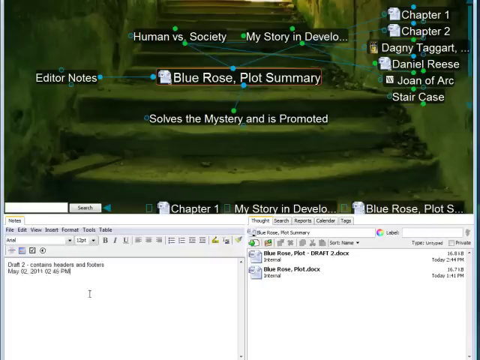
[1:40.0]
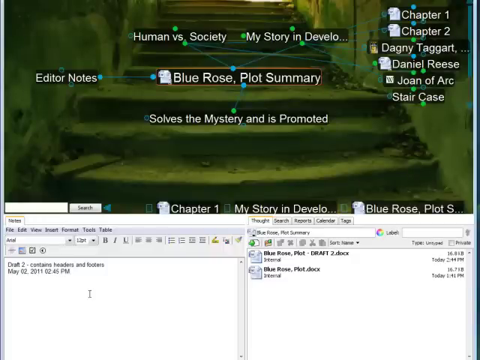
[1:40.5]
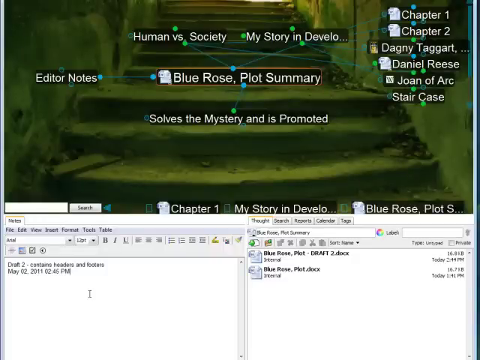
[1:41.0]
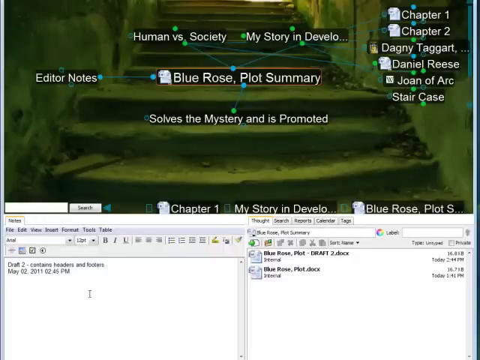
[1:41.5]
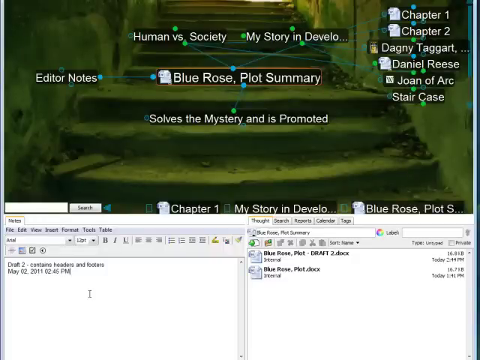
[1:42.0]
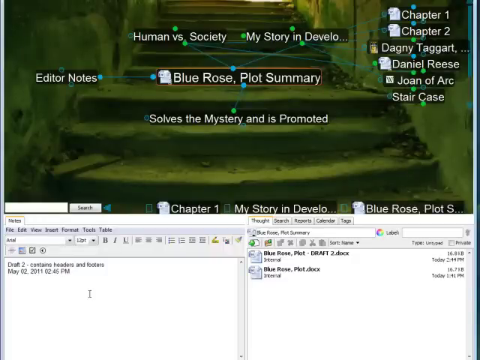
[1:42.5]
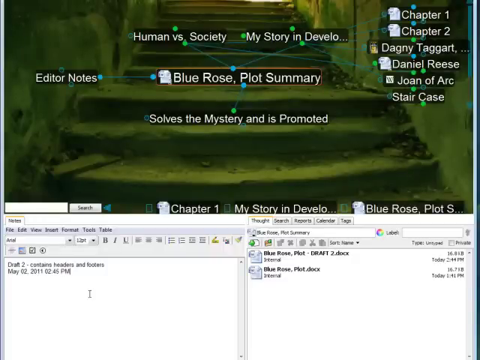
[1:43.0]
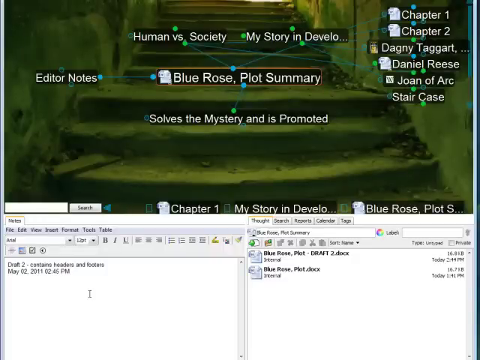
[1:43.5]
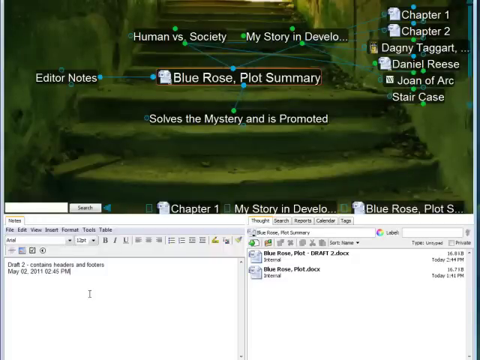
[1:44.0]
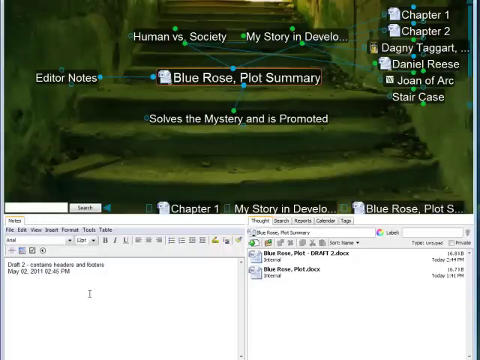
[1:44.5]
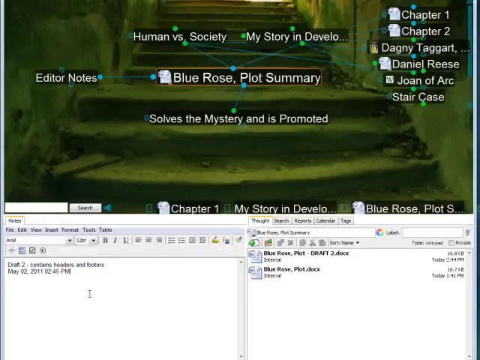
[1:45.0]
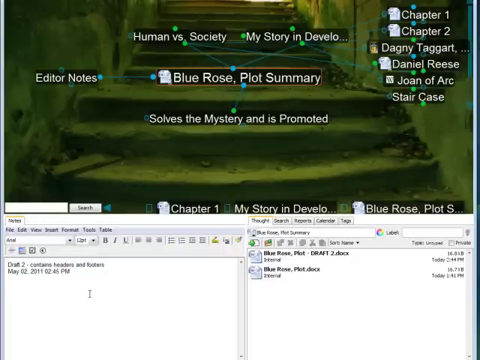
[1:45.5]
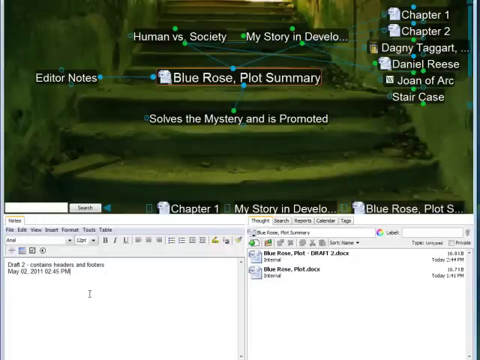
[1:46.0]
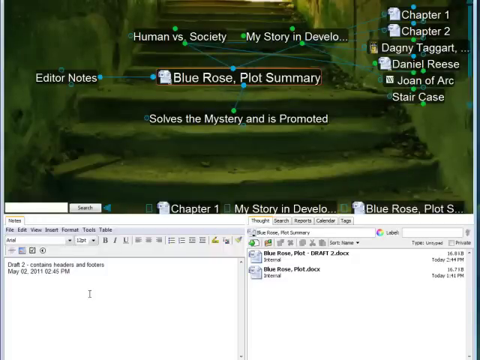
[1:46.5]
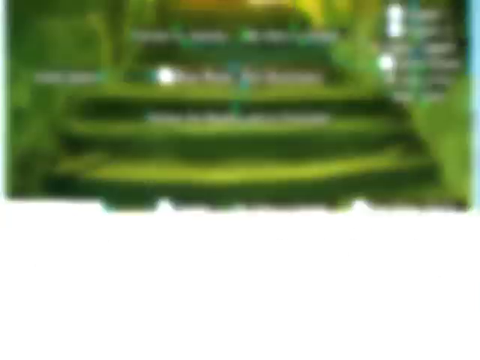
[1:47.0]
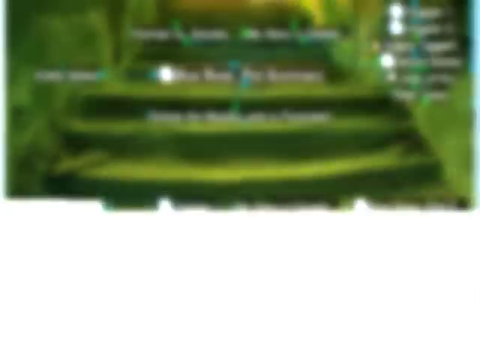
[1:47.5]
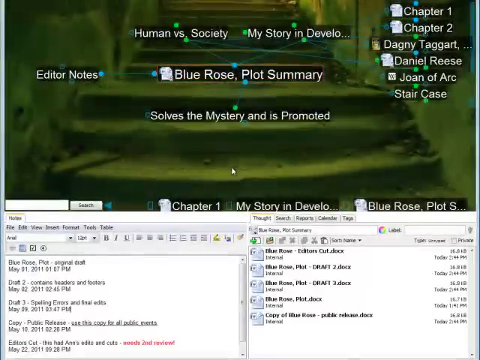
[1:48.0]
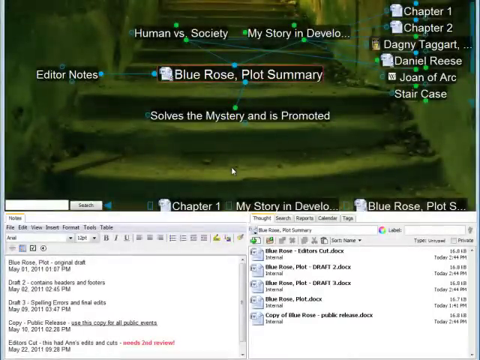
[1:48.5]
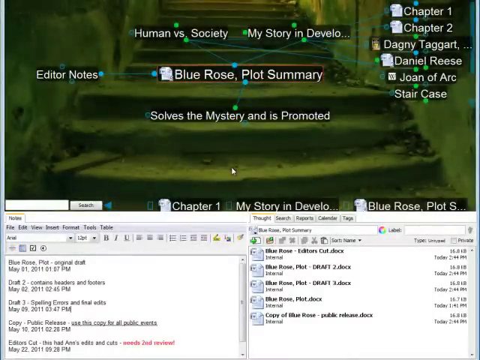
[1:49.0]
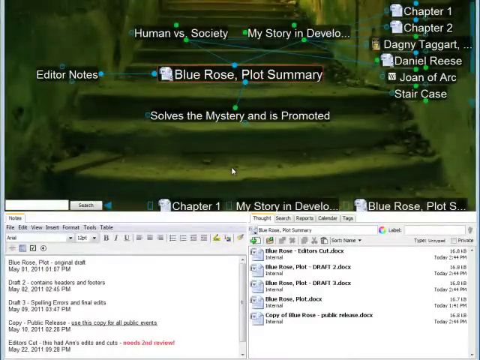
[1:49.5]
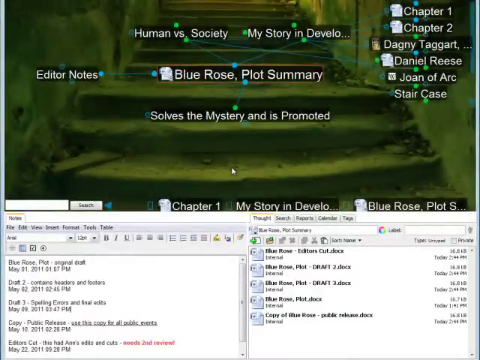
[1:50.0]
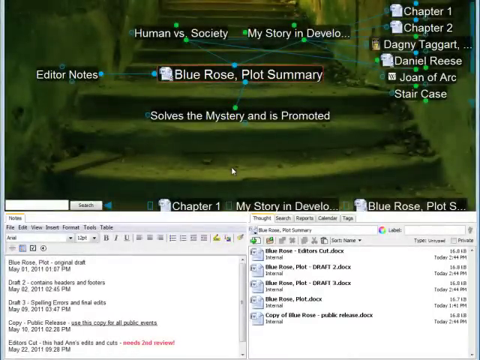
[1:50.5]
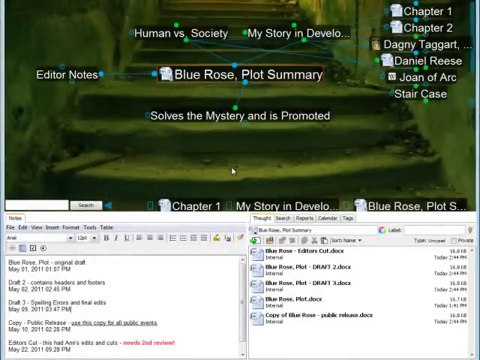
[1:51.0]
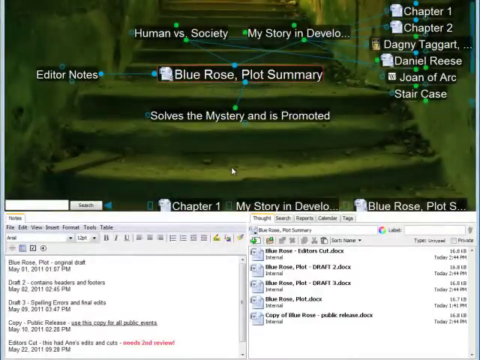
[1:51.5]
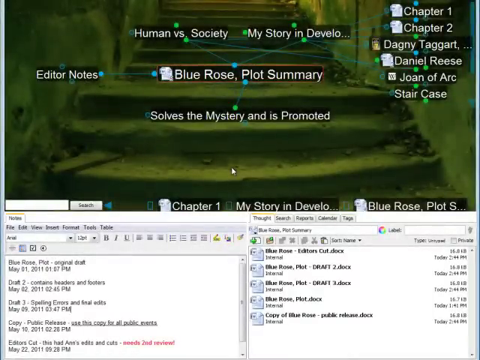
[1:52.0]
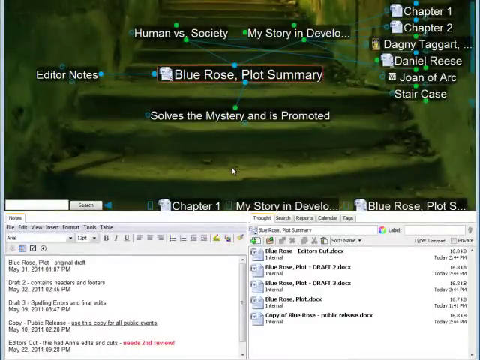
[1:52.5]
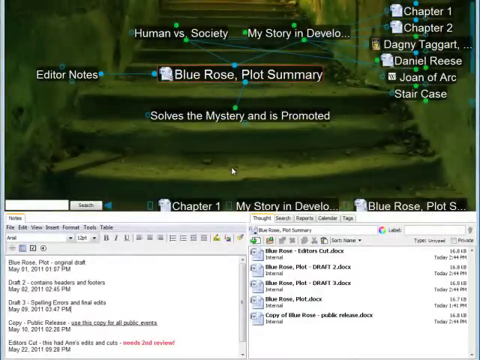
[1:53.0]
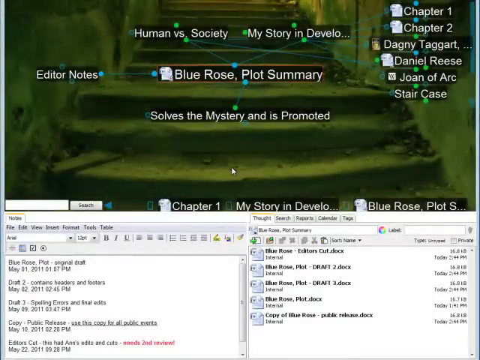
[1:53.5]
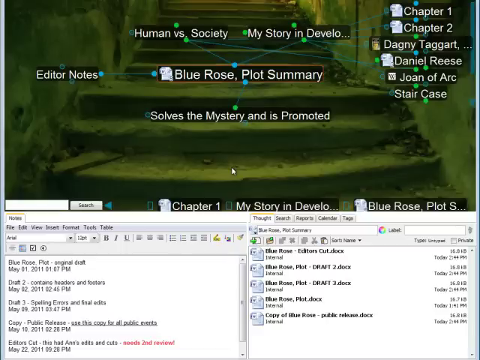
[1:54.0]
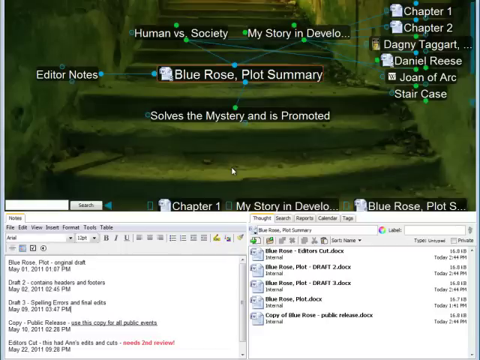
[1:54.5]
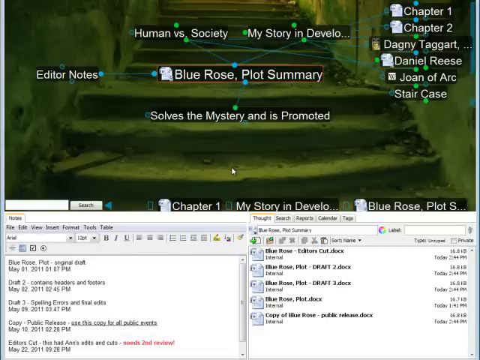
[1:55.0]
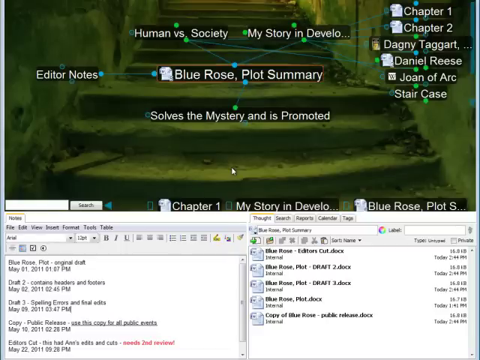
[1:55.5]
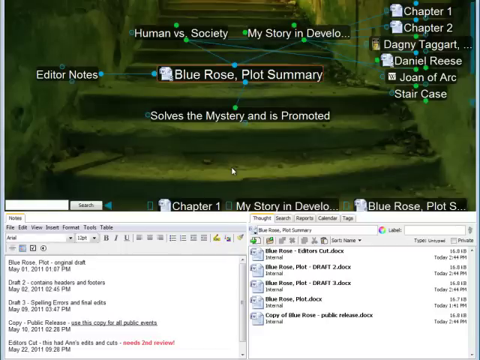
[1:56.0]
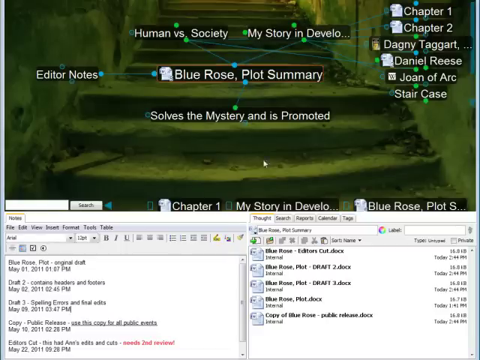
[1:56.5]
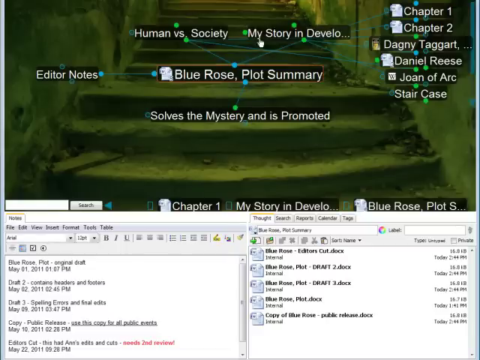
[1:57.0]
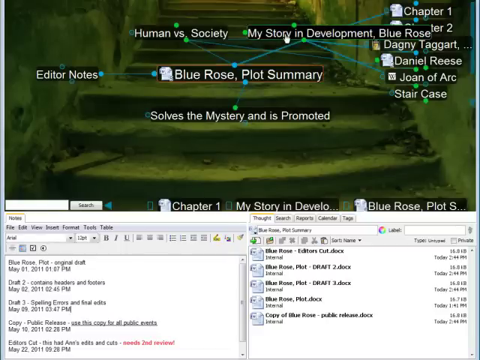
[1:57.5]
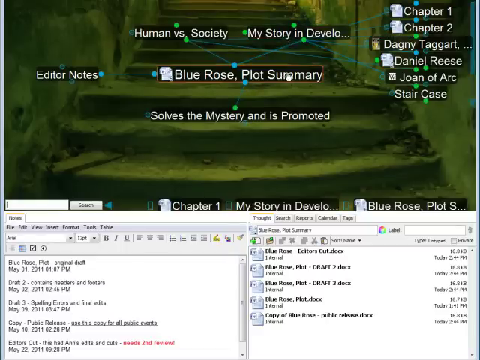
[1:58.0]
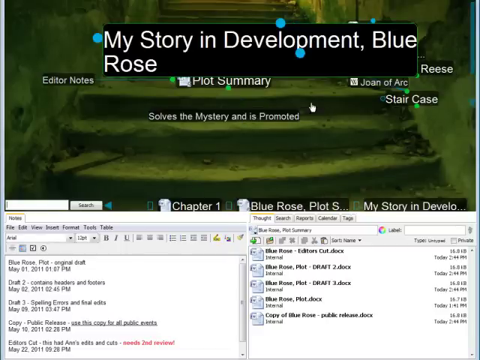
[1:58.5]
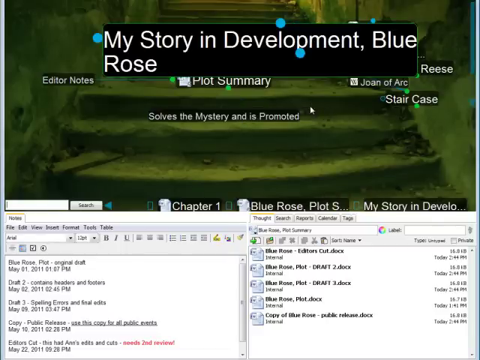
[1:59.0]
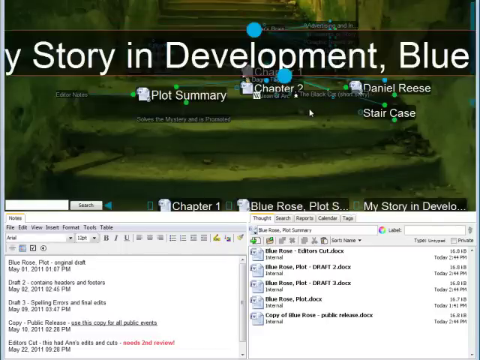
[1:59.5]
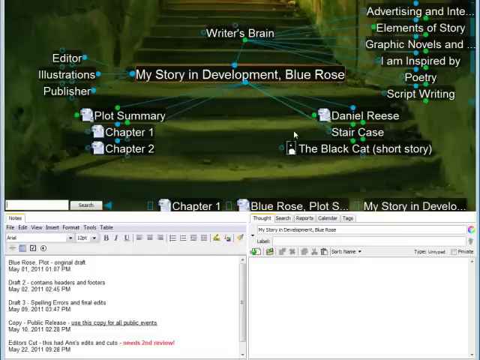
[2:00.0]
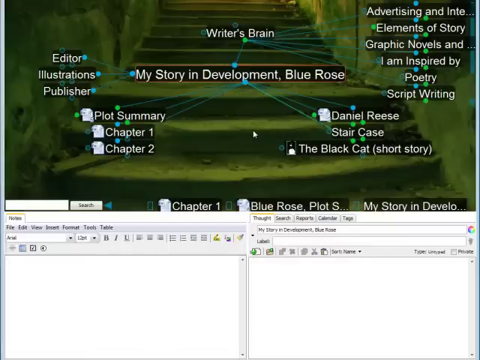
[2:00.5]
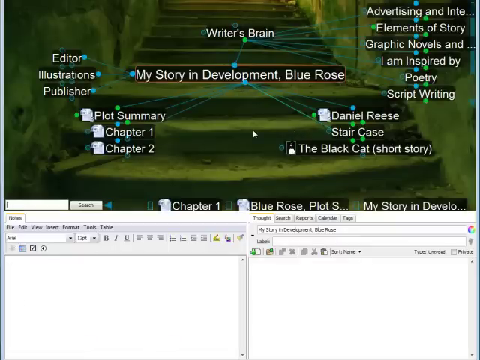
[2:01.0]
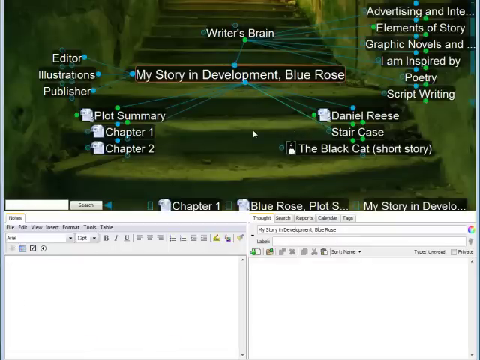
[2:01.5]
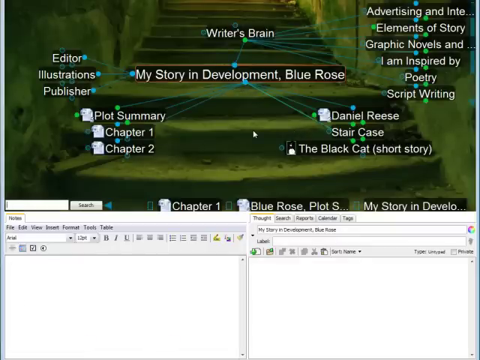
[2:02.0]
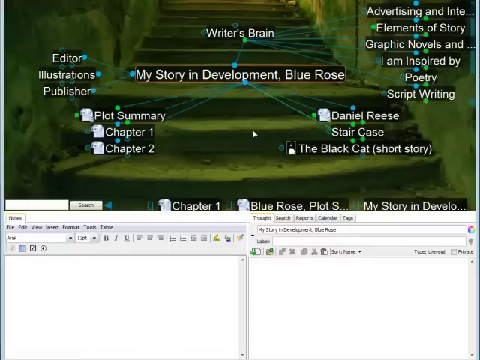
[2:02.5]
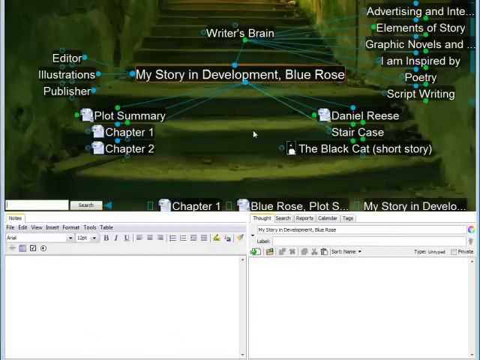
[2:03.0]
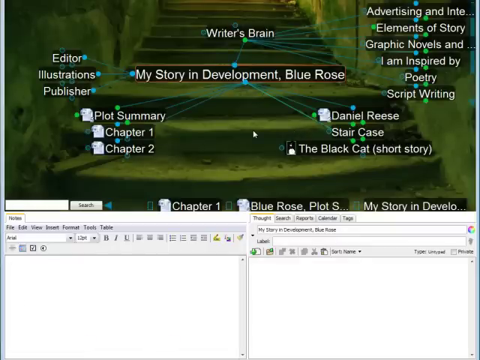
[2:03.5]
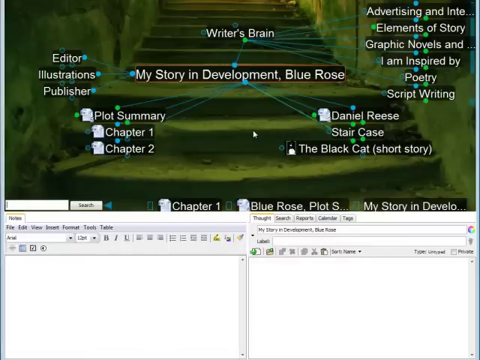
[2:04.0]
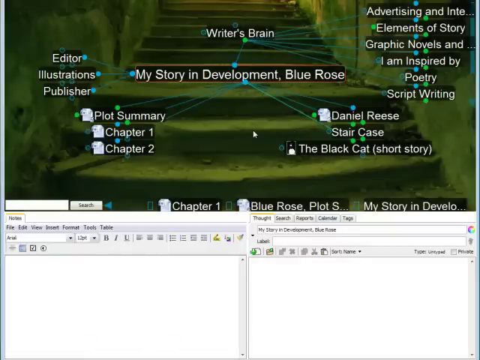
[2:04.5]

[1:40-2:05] The whole tab is visible, and the view transitions to other tabs from the notepads; these tabs then disappear. The view returns to the original layout, with the Blue Rose plot as the main file. The files on the notepads are listed with the dates they were added, times, and sizes in KB. On the left side there are also other files with dates, some from May, and different sizes.